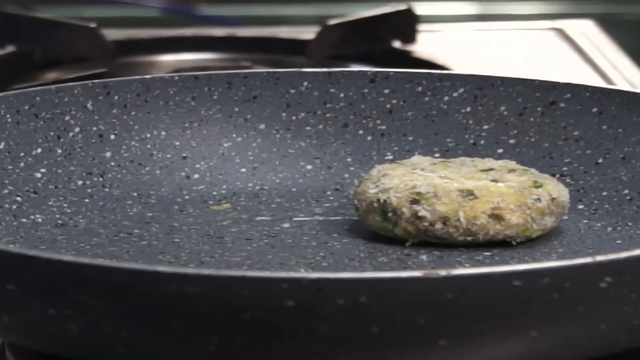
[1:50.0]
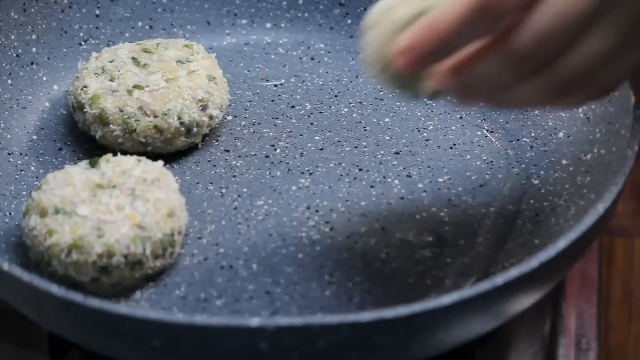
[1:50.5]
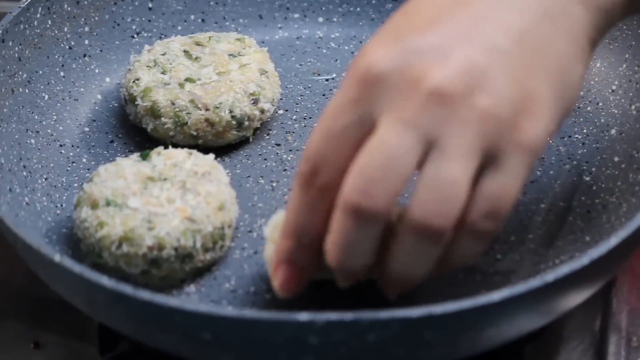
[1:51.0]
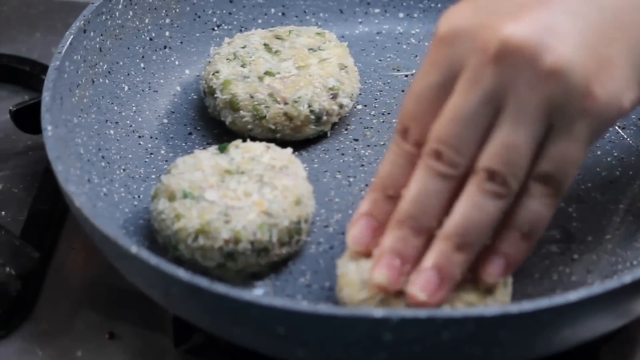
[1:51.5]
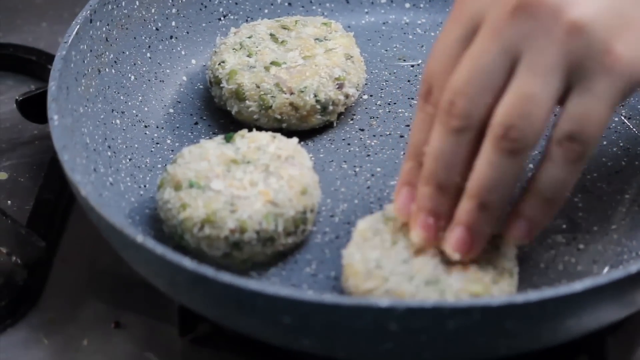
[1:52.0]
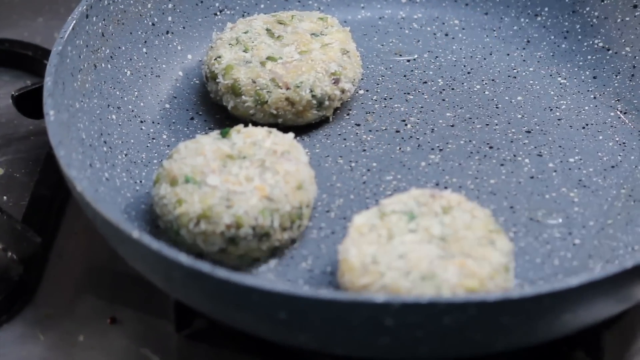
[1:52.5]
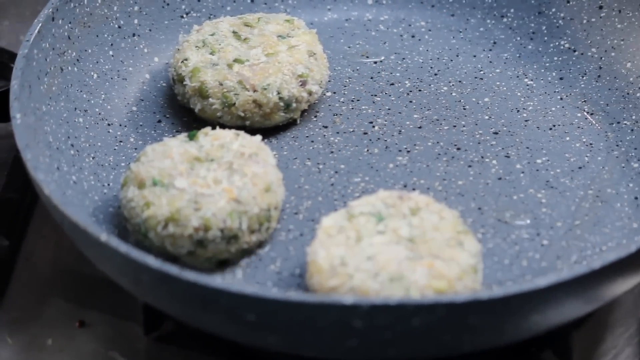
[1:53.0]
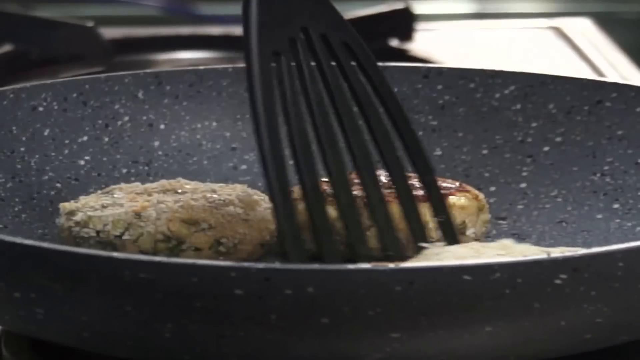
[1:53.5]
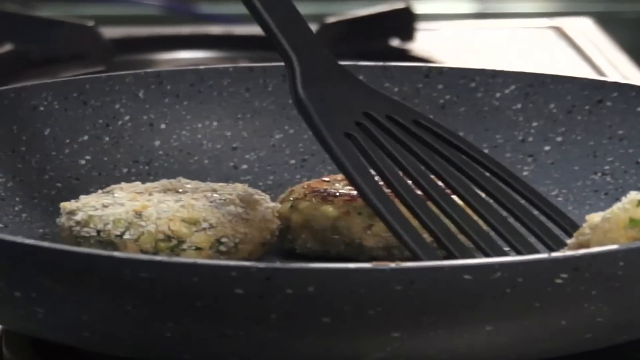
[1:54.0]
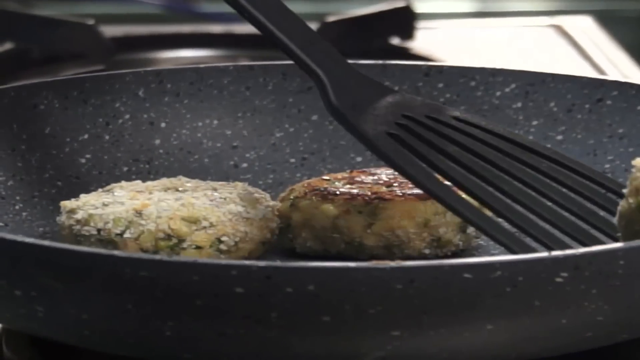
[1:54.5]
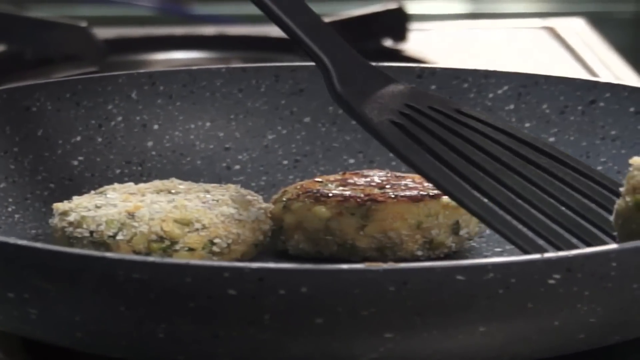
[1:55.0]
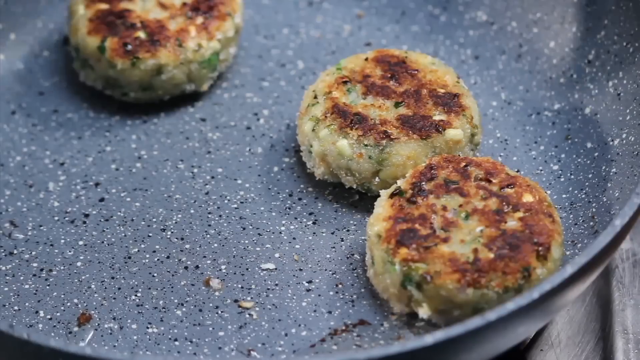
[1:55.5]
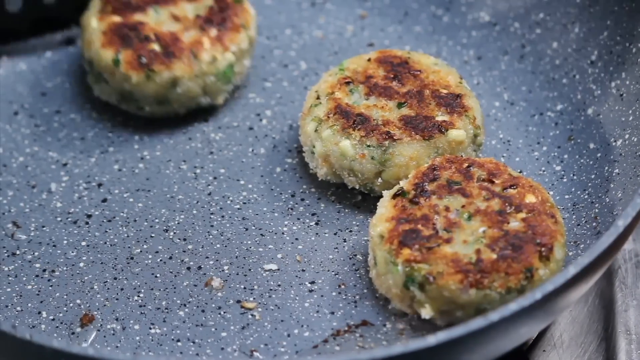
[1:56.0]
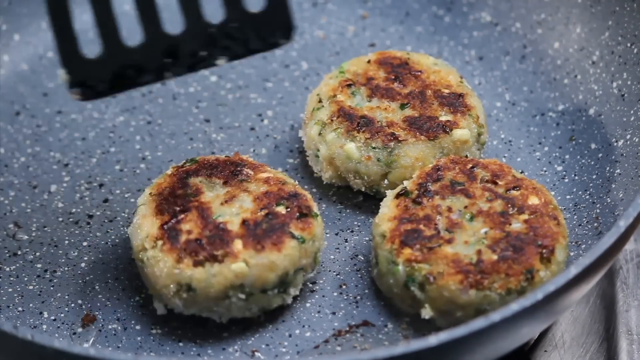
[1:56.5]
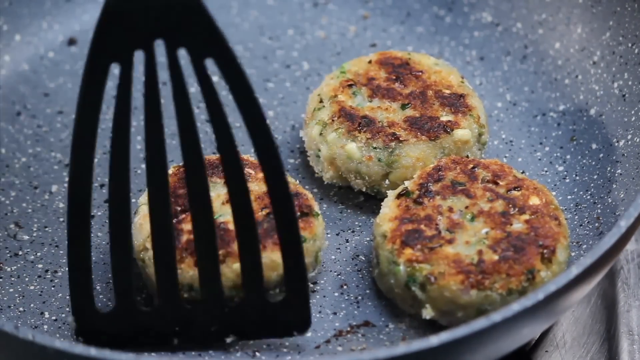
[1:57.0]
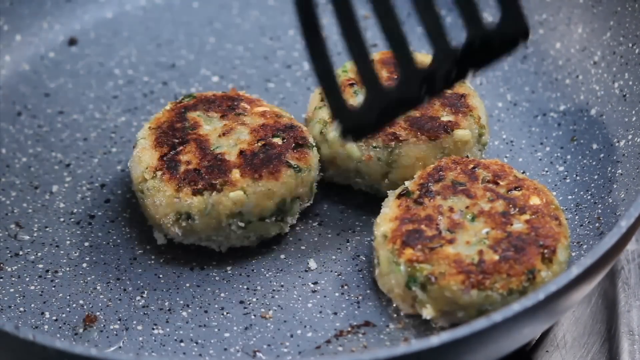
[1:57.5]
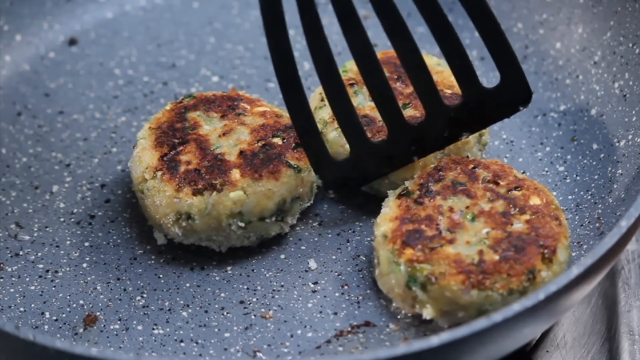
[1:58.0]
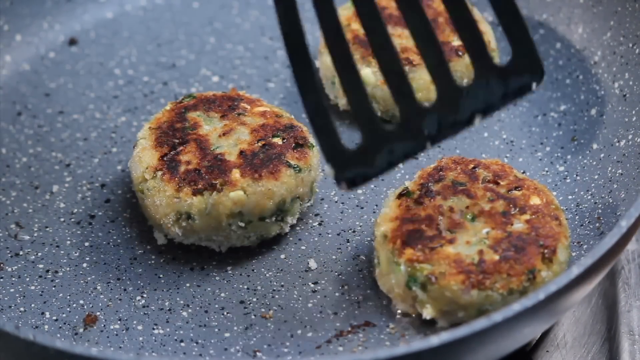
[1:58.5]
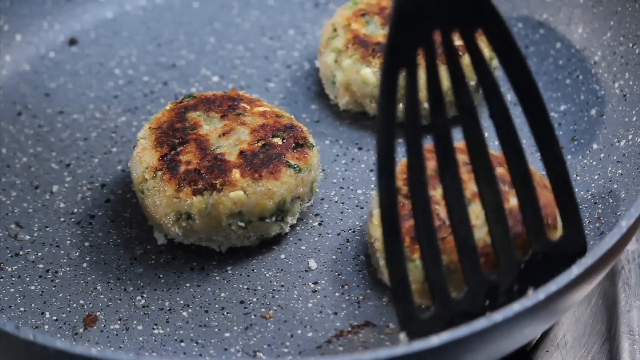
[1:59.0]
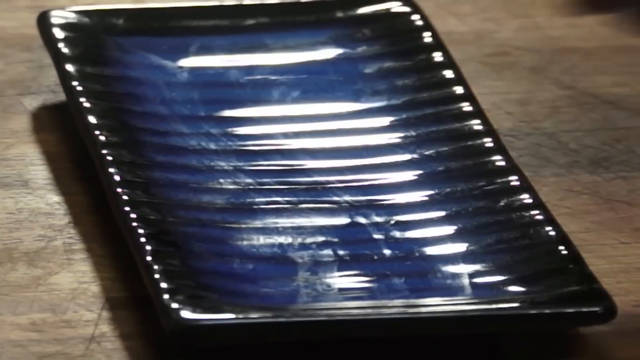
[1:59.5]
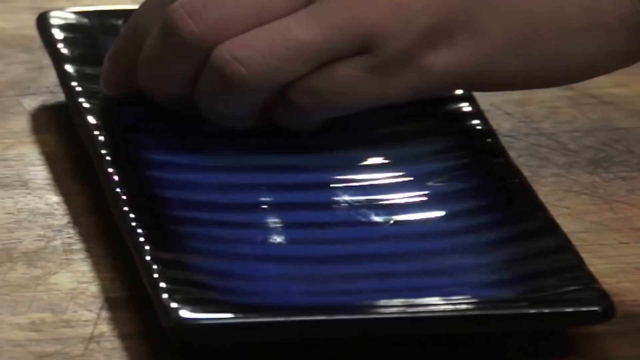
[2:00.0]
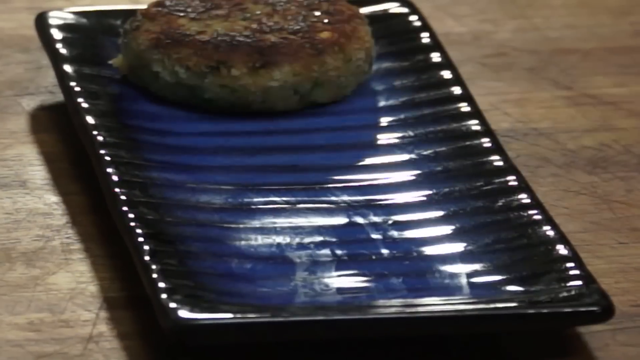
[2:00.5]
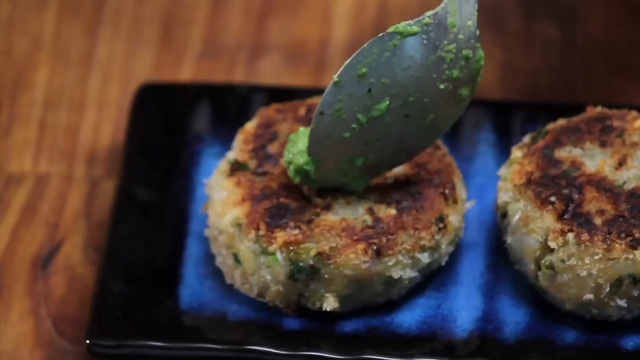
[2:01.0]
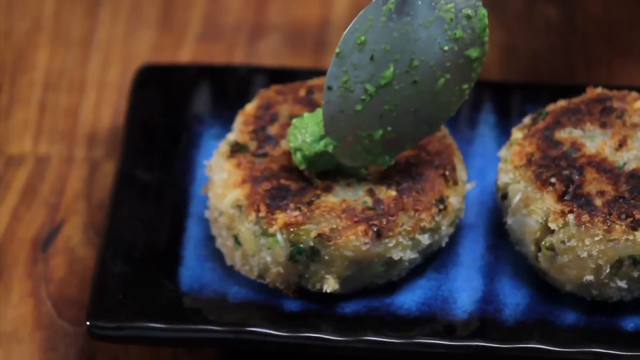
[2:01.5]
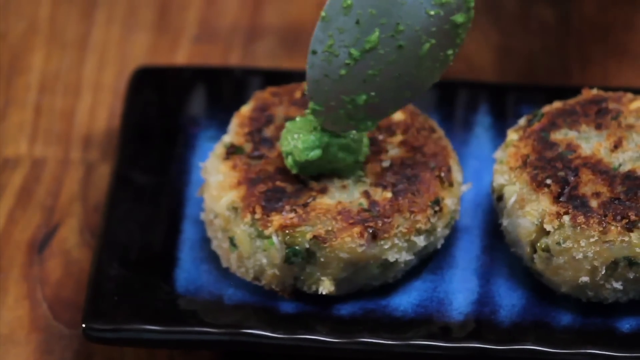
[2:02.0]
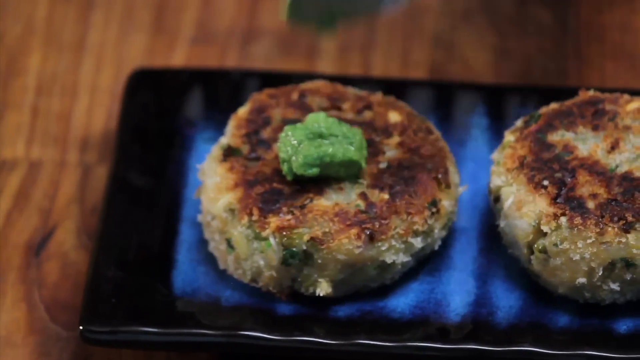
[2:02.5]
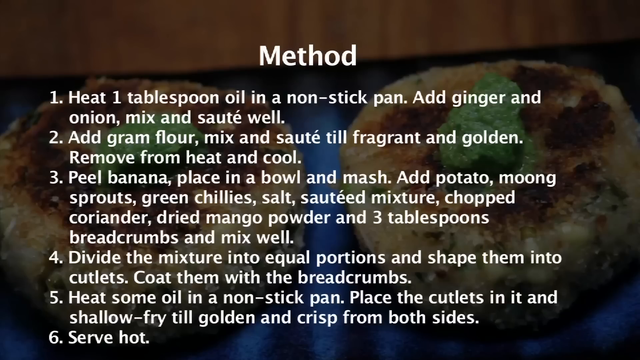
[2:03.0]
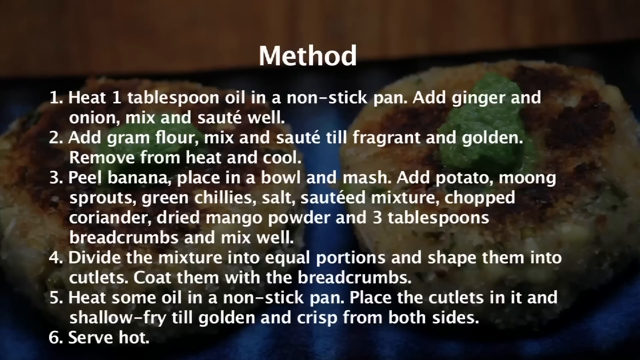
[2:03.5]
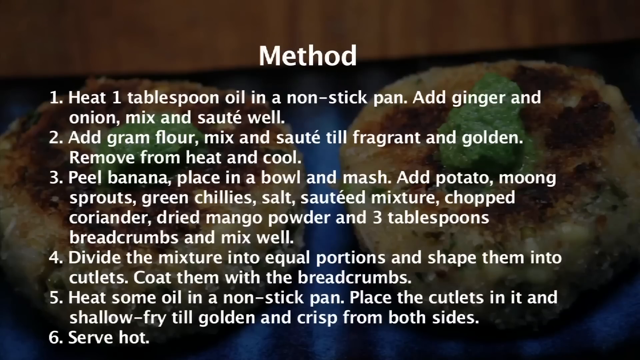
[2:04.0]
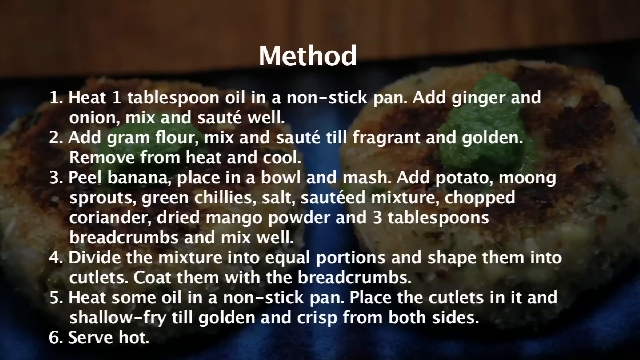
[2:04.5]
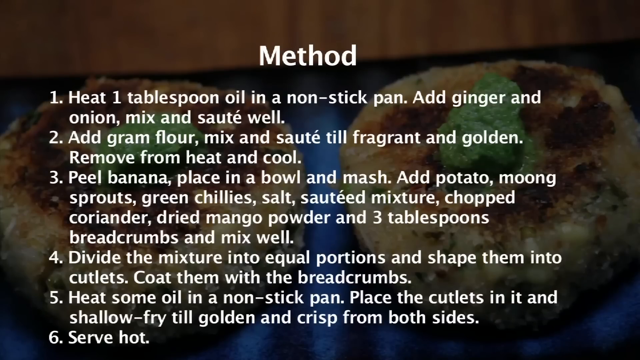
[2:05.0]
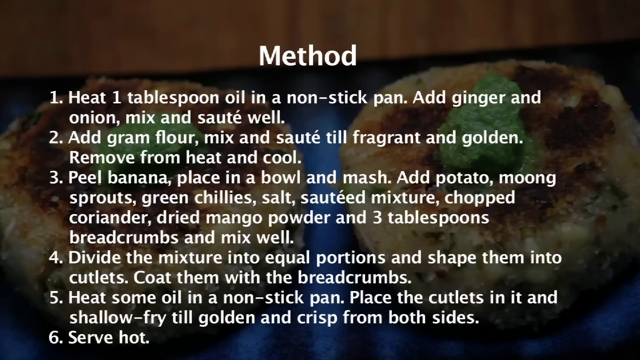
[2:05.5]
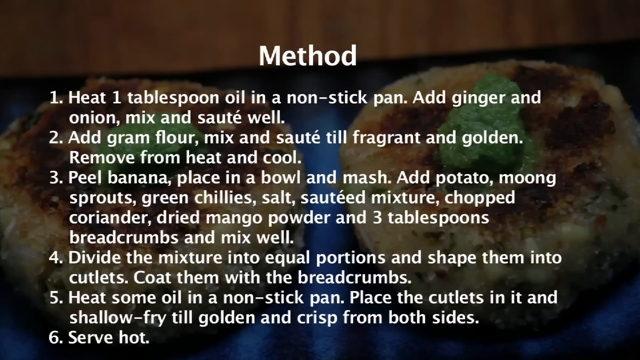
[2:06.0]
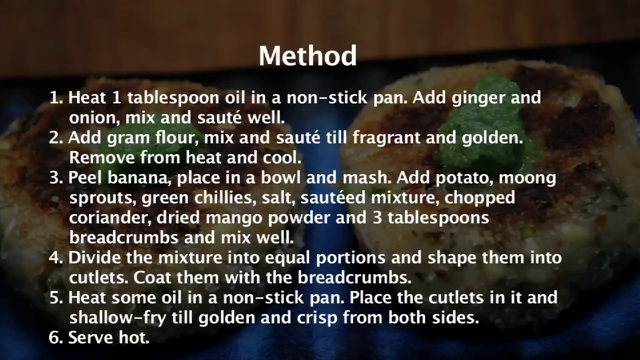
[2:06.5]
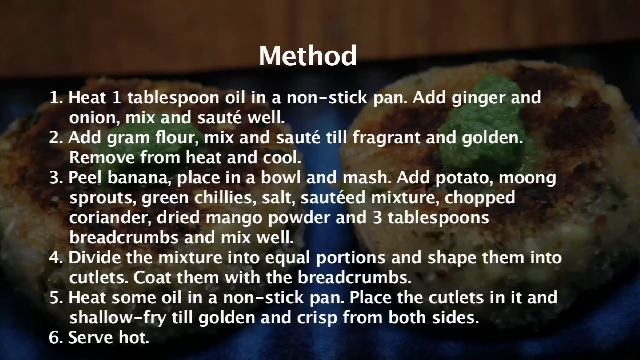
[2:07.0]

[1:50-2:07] Patties fry in the pan, three so far. She uses a slotted spatula to flip them over until they are brown, then places three of them across a rectangular black glass tray and dabs some green stuff on them. A method for the recipe is shown, including the steps "add gram flour, mix, and saute until fragrant and golden. Remove from the heat and cool" and "Divide the mixture into equal portions and shape them into cutlets, and coat them with breadcrumbs. Heat some oil in a nonstick pan, place the cutlets in it, and fry until golden and crisp on both sides." The pan with the cutlets in it is shown.